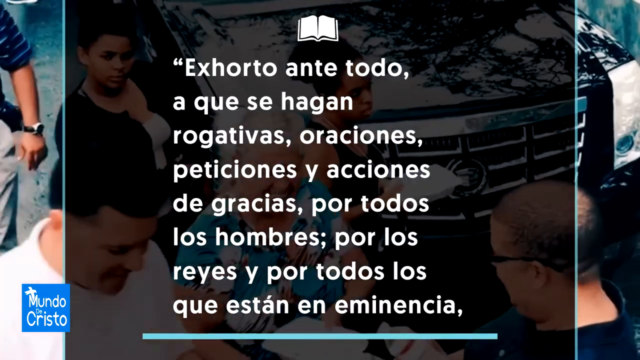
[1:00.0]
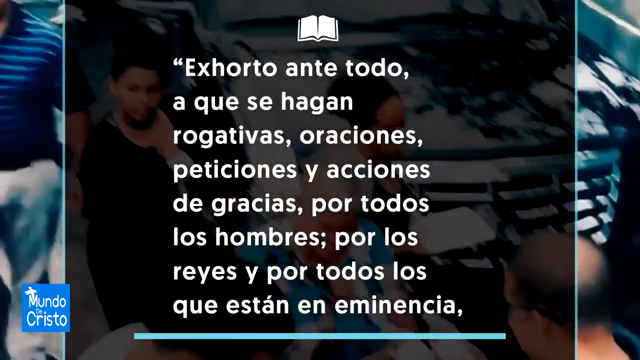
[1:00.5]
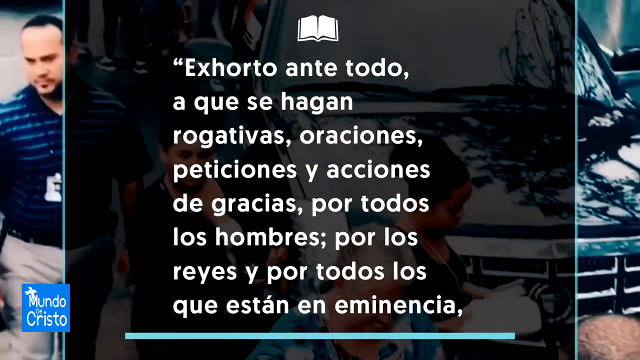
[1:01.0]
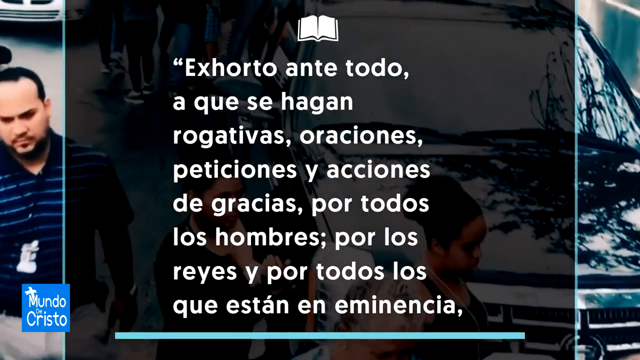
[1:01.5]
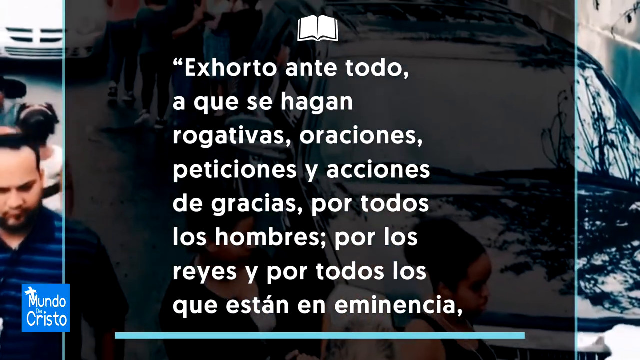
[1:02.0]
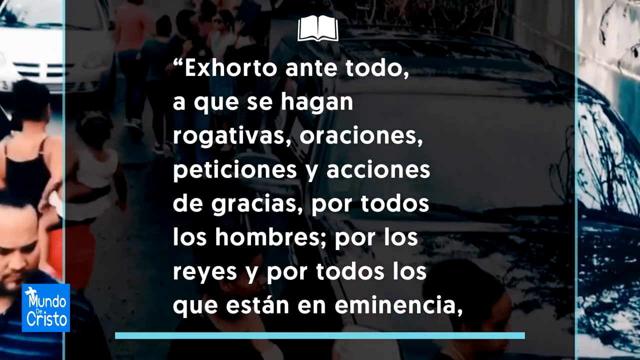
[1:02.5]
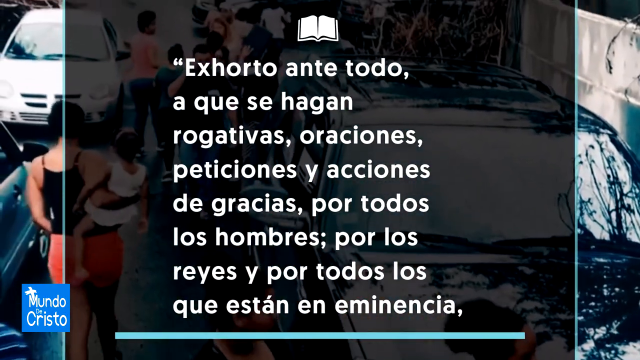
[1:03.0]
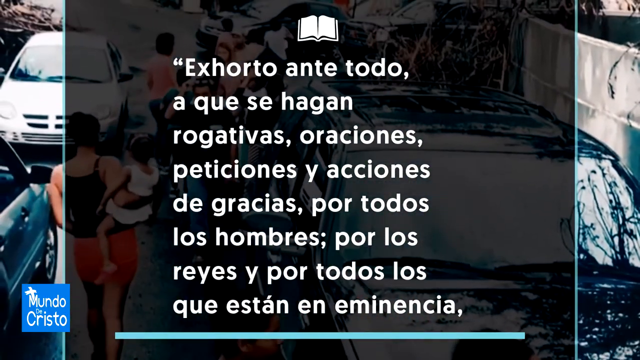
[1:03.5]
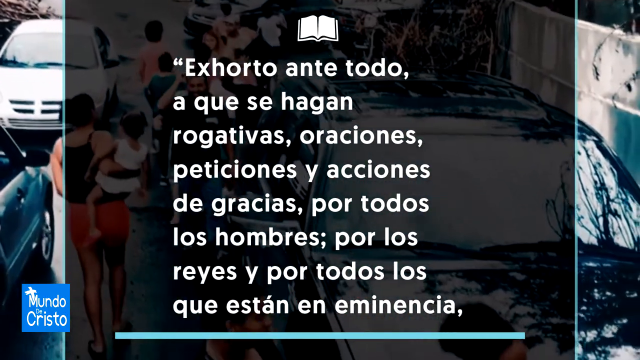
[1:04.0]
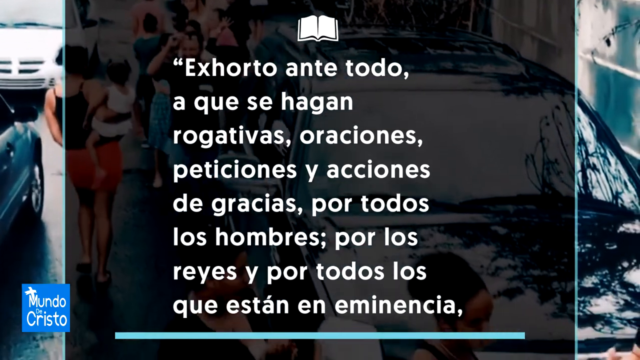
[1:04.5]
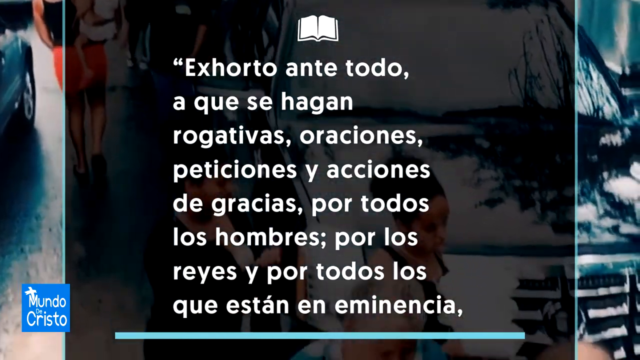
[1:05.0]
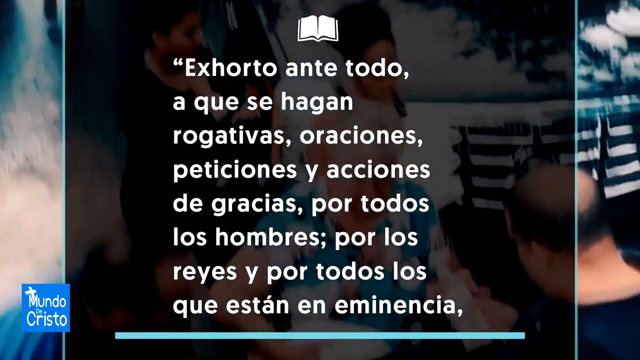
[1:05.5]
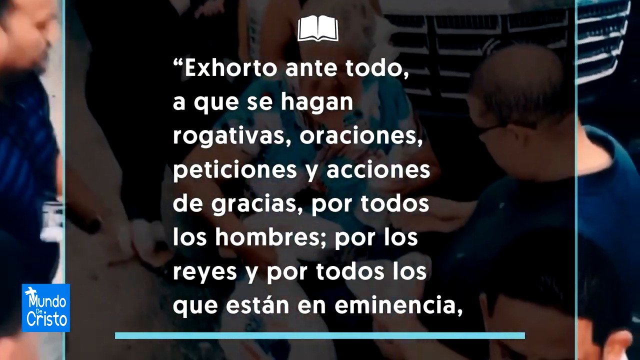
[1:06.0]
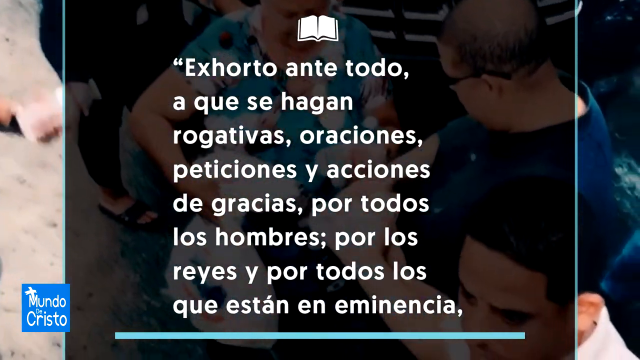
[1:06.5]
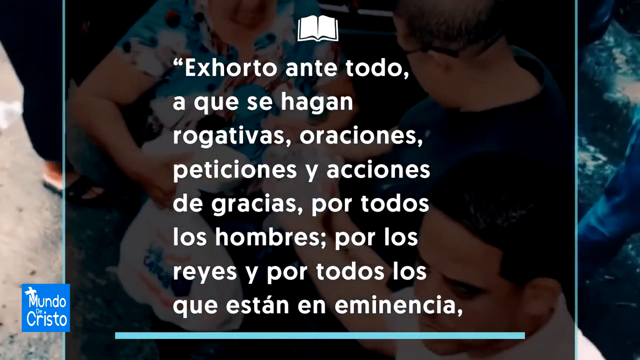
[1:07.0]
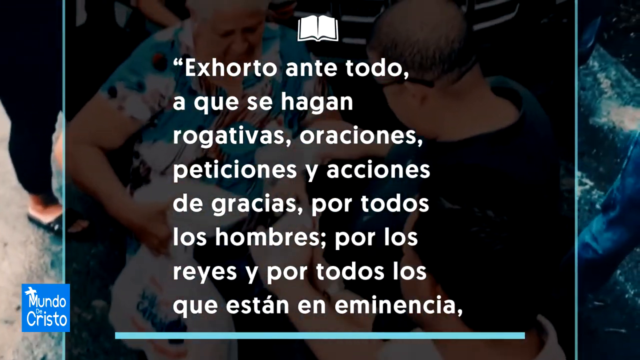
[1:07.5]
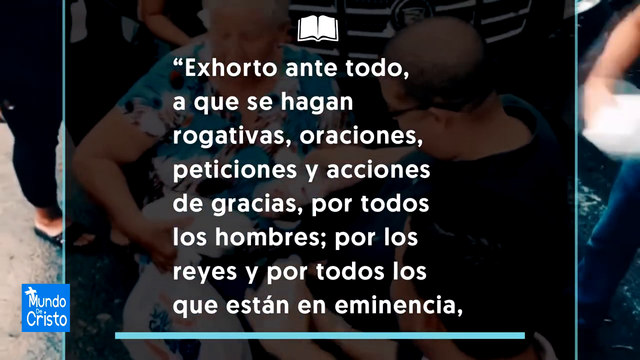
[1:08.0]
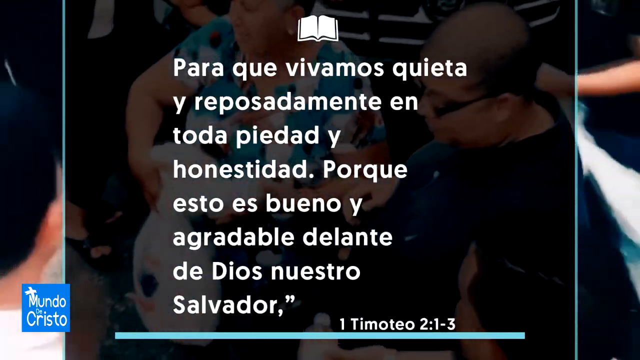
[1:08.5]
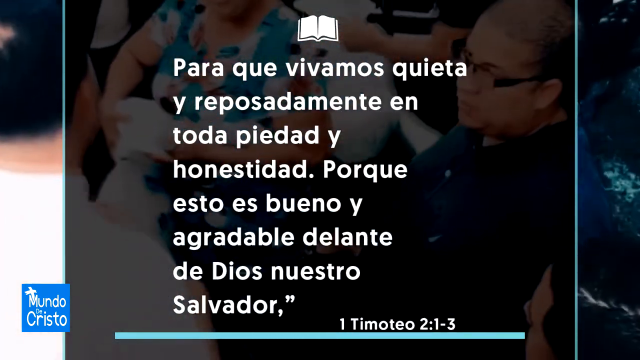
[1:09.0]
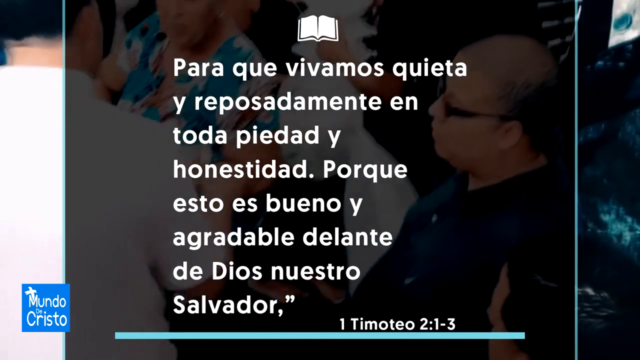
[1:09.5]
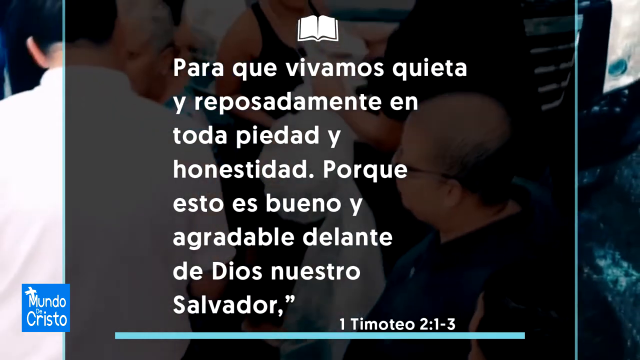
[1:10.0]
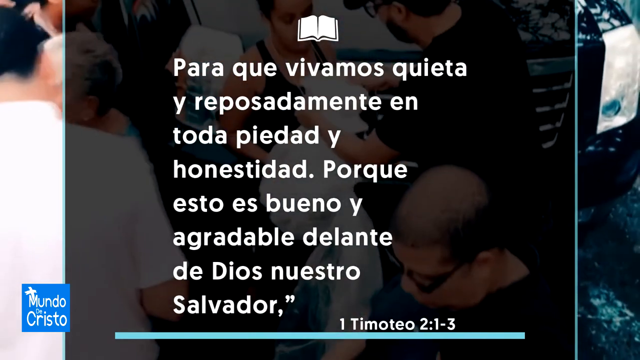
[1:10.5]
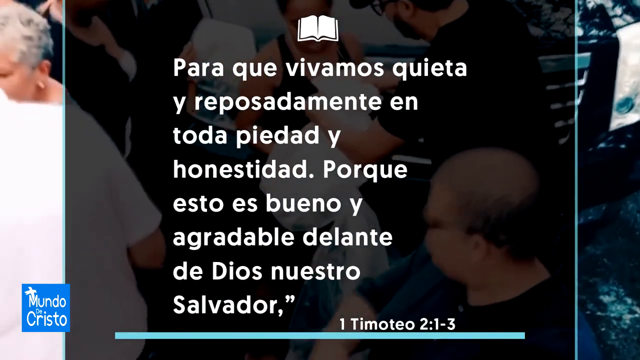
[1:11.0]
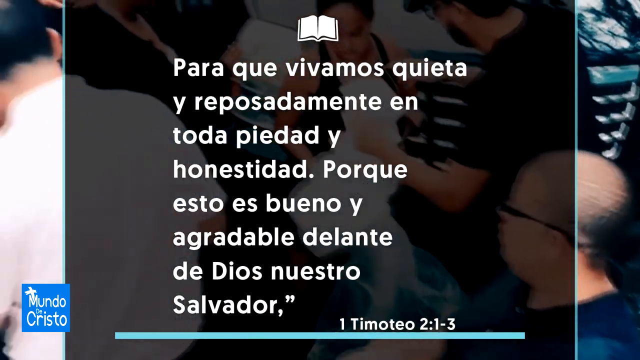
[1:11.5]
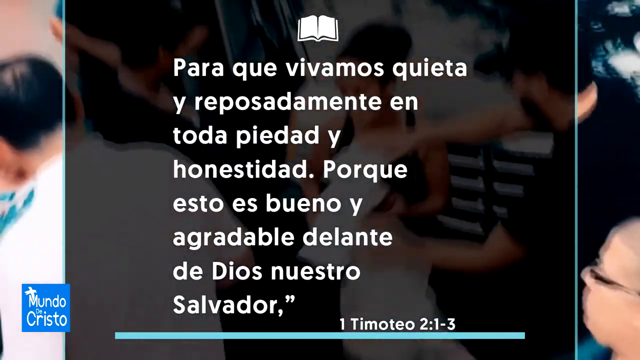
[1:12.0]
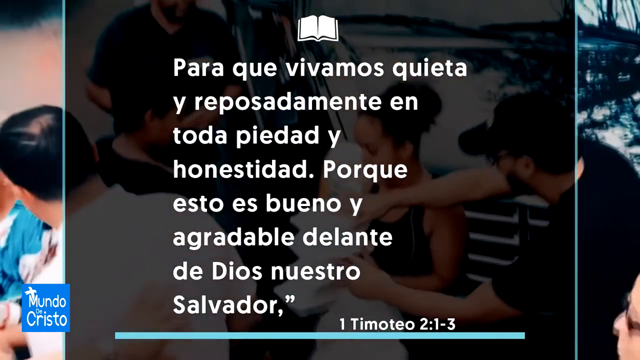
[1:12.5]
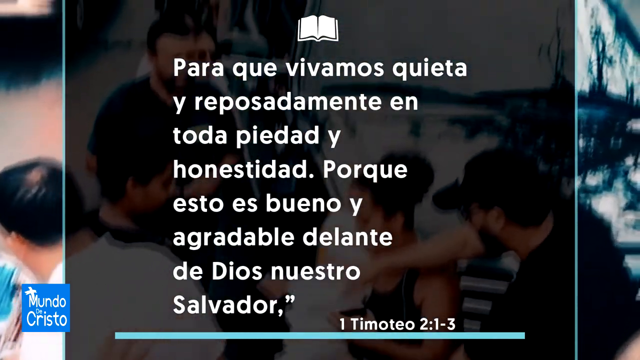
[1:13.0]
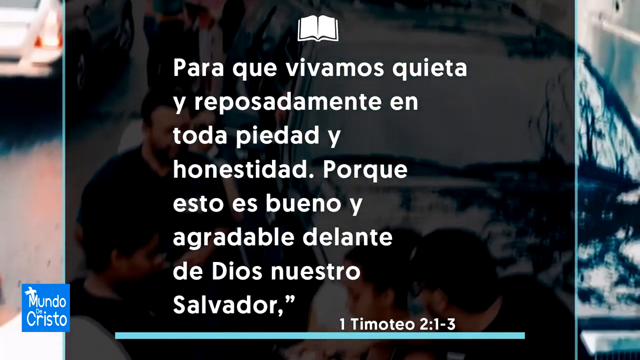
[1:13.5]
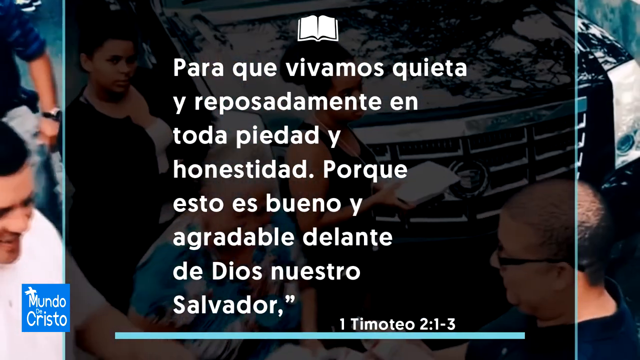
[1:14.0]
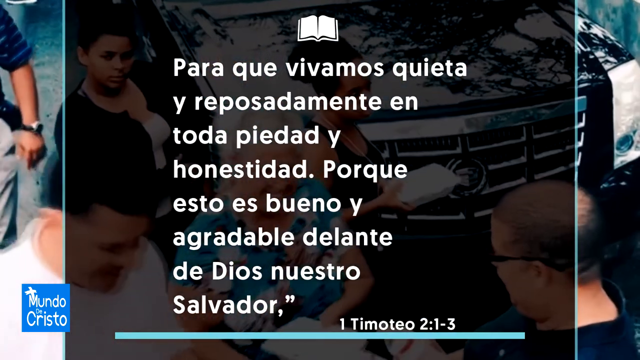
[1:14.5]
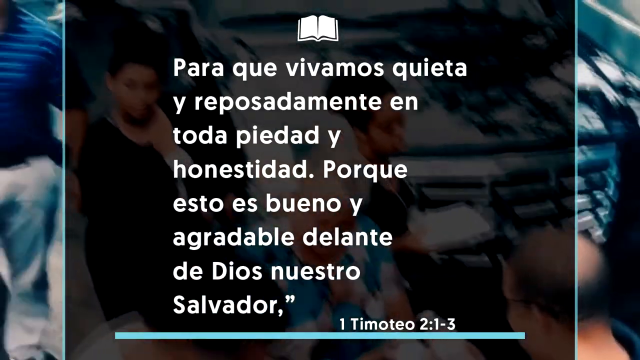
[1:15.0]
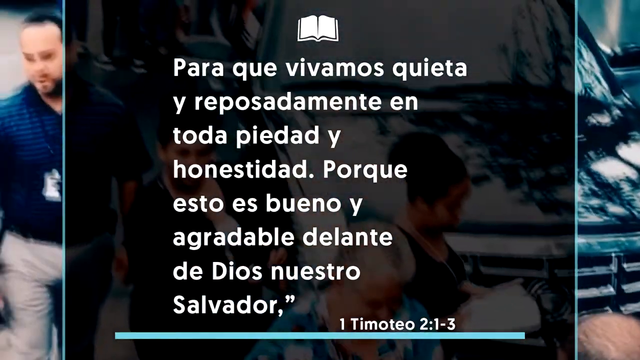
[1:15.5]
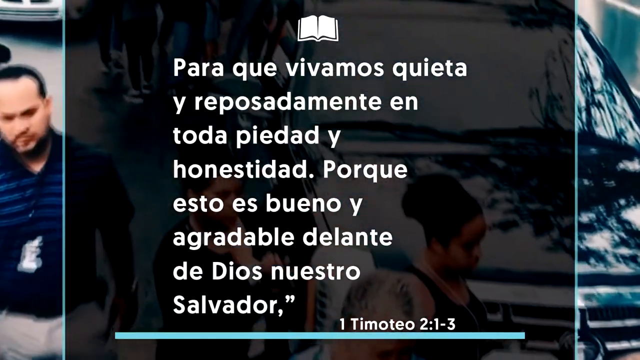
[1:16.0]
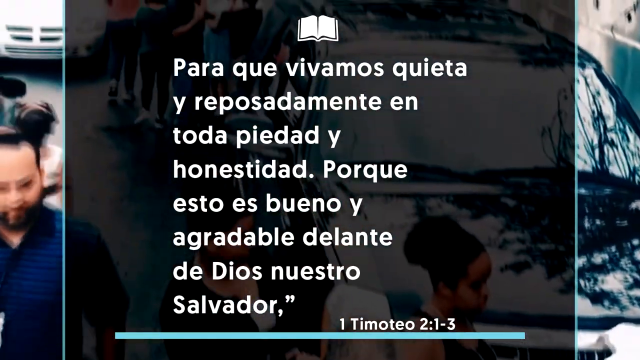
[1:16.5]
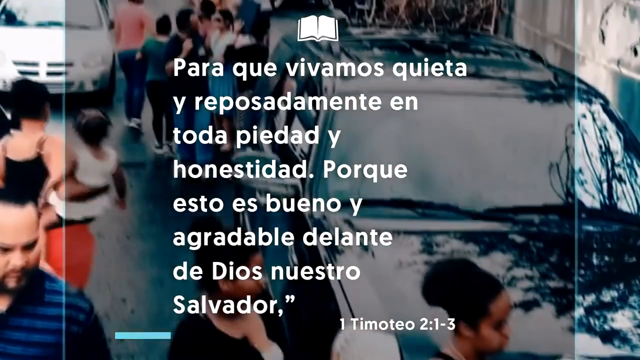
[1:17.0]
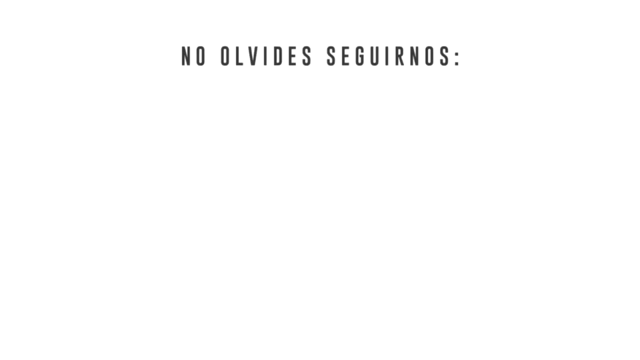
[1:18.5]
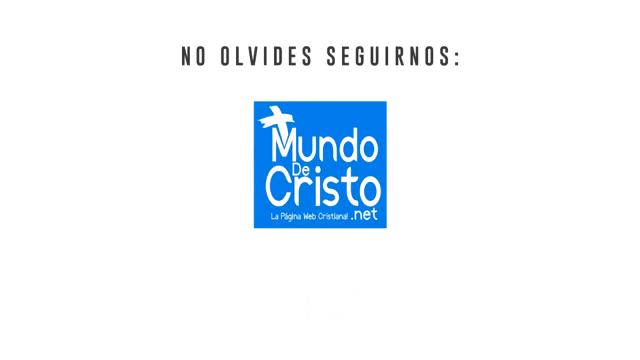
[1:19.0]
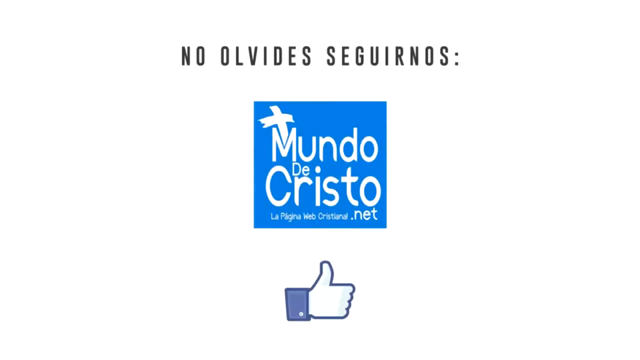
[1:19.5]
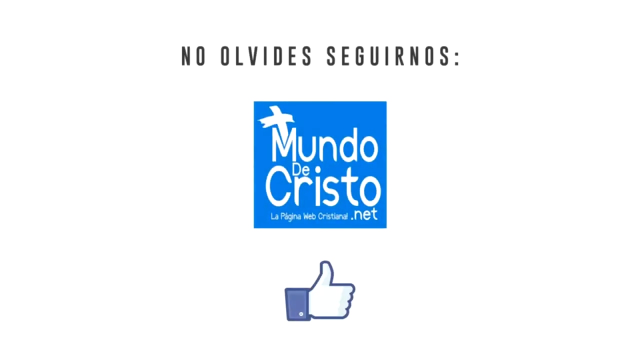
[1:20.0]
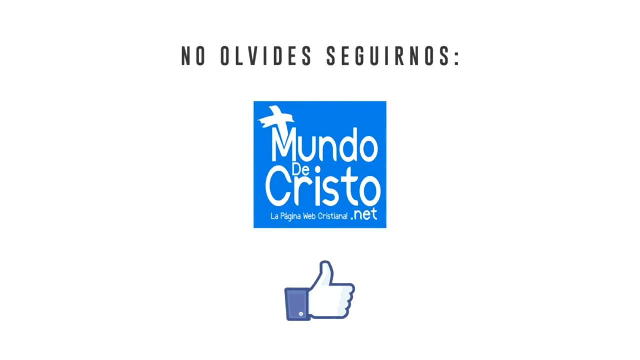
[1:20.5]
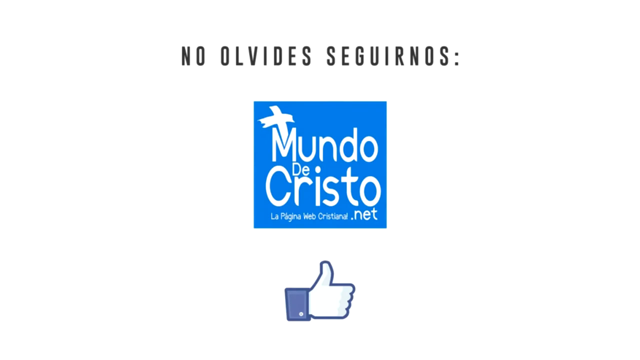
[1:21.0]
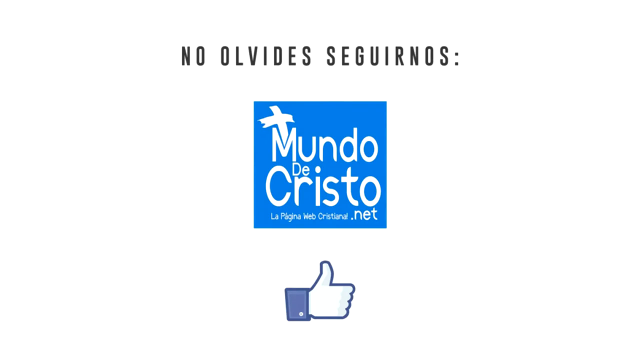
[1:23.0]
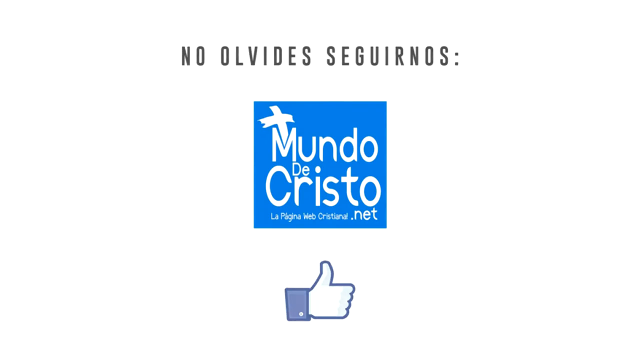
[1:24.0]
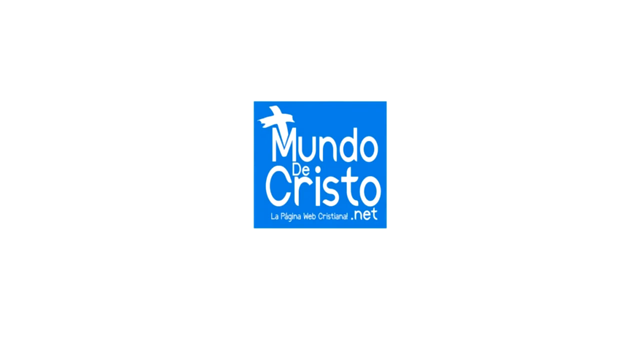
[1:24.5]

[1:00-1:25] Various people appear in the background while a transparent black box with white wording reads "Exhorto ante todo, a que se hagan rogativas oraciones, peticiones y acciones de gracias por todos los hombres, por los reyes y por todos los que están en eminencia." People walk in the background, including a woman holding a child who is walking between cars. The camera pans to more people grouped together, talking and helping each other. A new black box appears with white block lettering reading "Para que vivamos quieta y reposadamente en toda piedad y honestidad. porque esto es bueno y agradable delante de Dios nuestro salvador." At the bottom of the screen it reads "1 Timoteo 213." Then a white screen pops up with black lettering at the top reading "No Olvides Seguirnos." Below is a logo of a blue box with white writing and a white cross that reads "Mundo de Cristo," and beneath that is a Facebook-like logo.